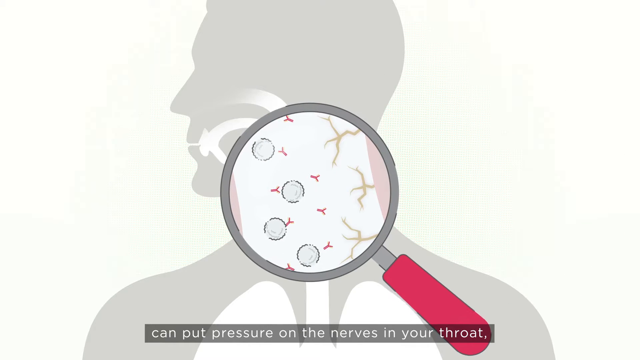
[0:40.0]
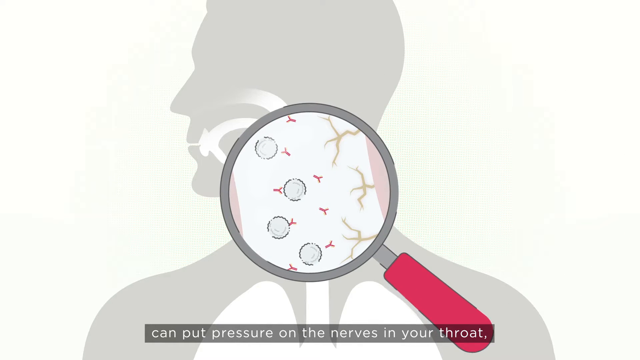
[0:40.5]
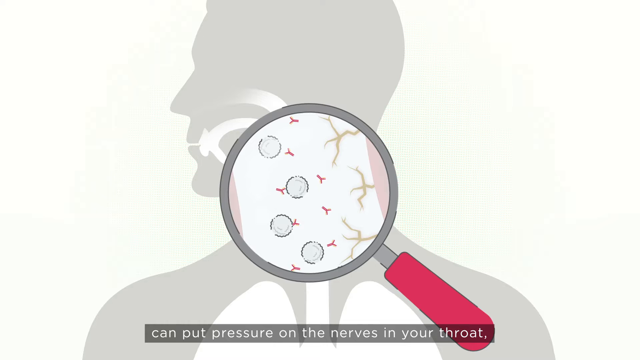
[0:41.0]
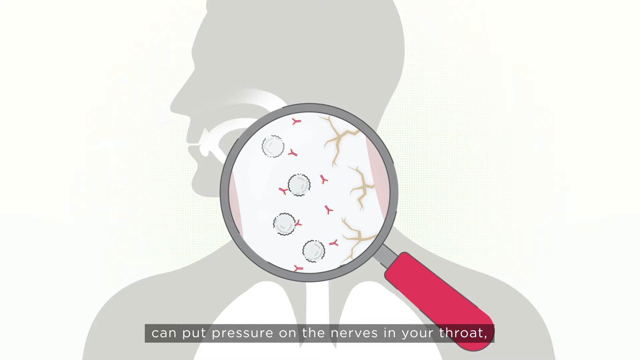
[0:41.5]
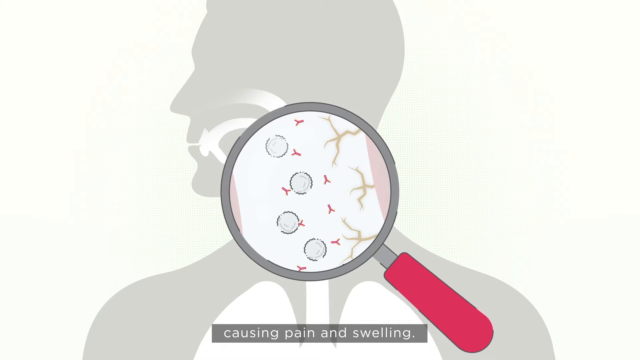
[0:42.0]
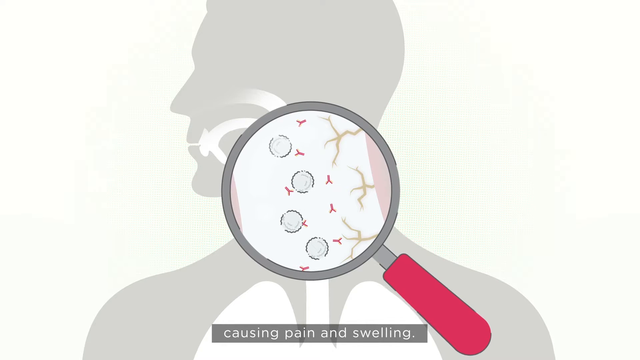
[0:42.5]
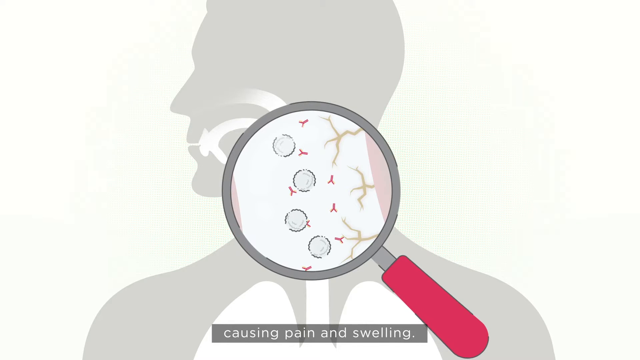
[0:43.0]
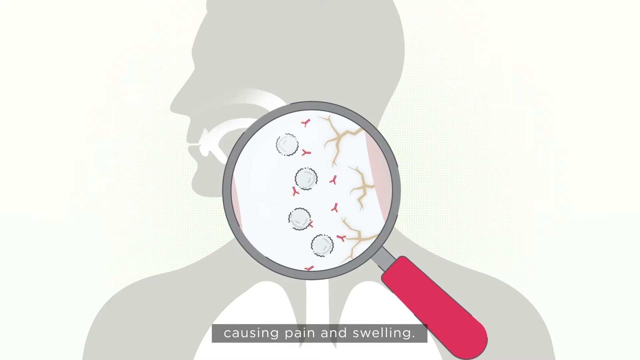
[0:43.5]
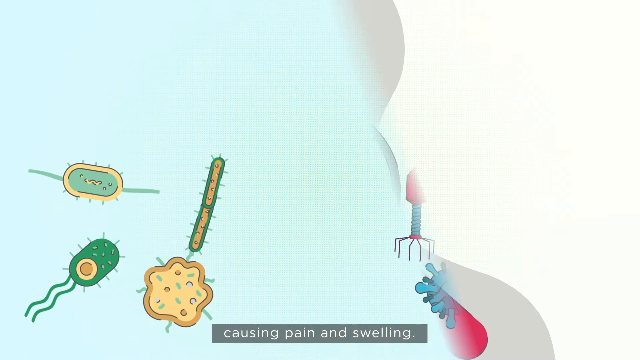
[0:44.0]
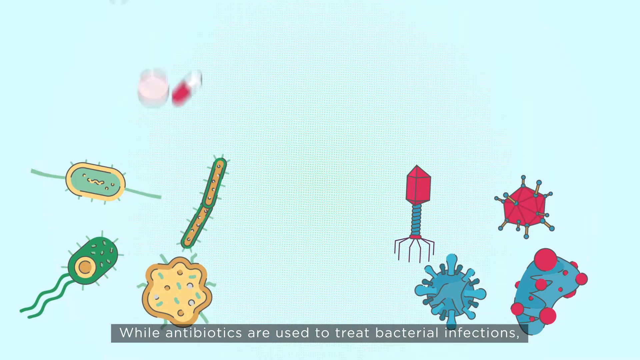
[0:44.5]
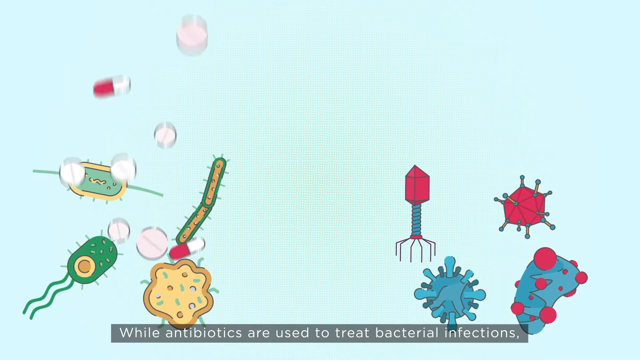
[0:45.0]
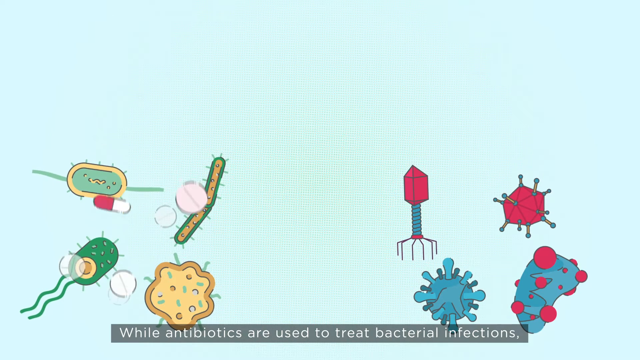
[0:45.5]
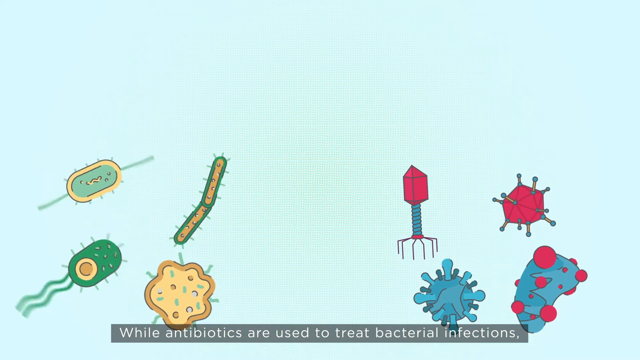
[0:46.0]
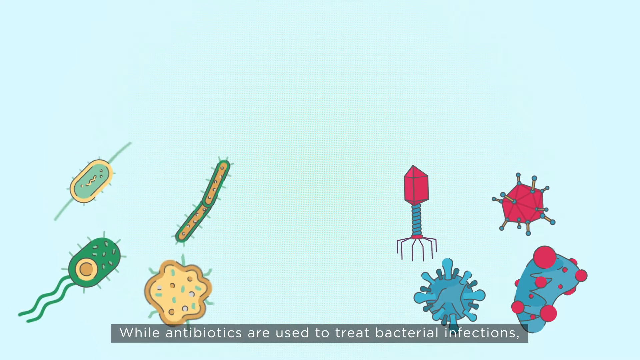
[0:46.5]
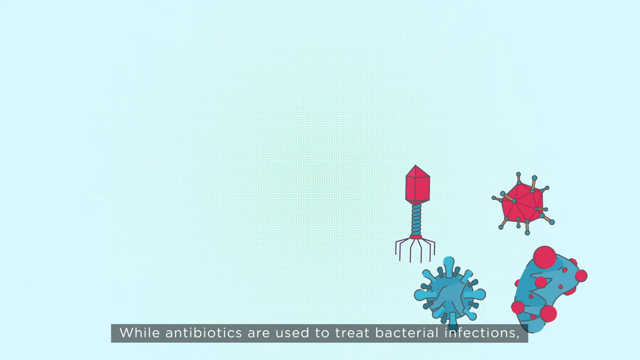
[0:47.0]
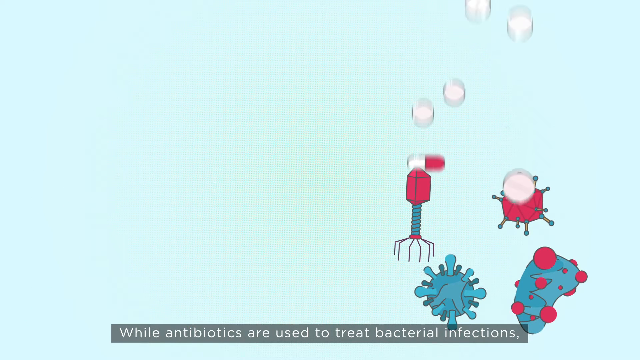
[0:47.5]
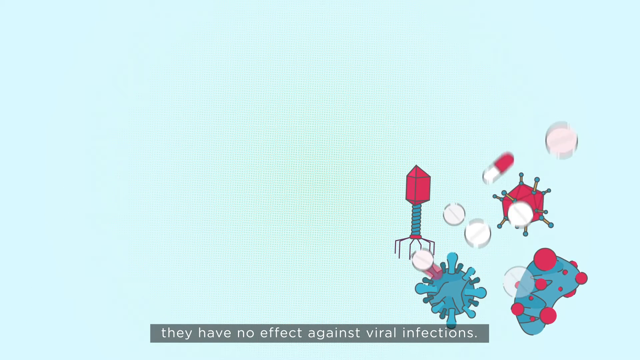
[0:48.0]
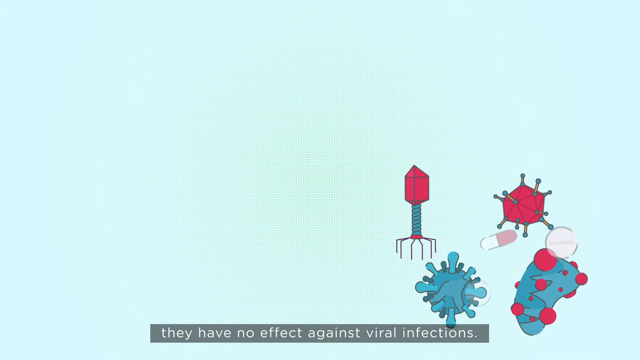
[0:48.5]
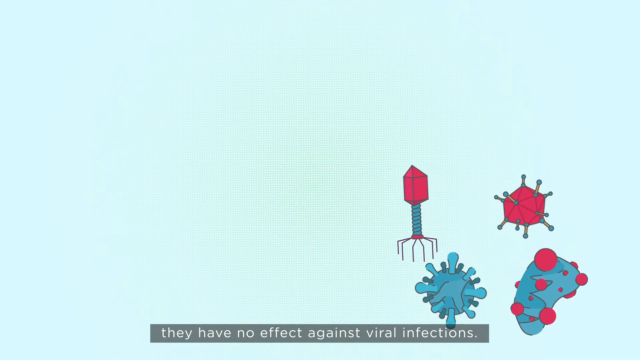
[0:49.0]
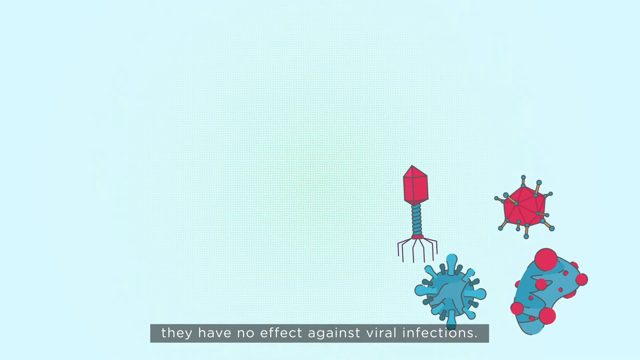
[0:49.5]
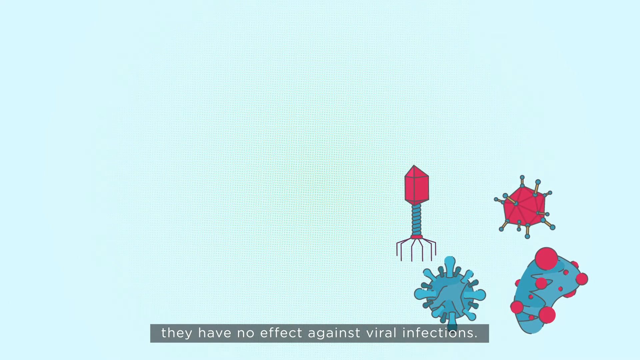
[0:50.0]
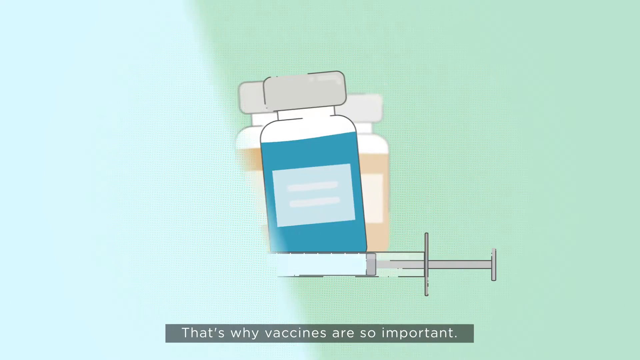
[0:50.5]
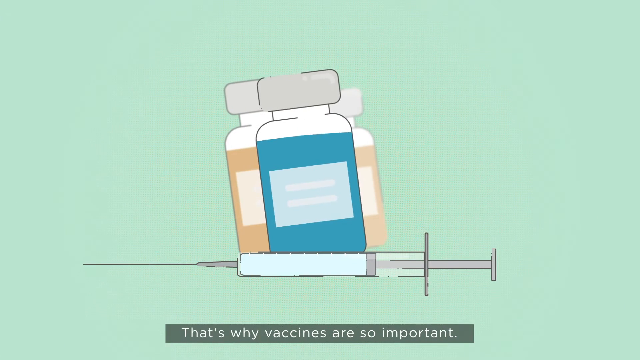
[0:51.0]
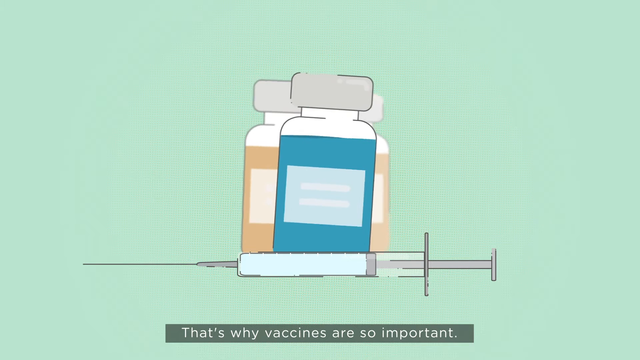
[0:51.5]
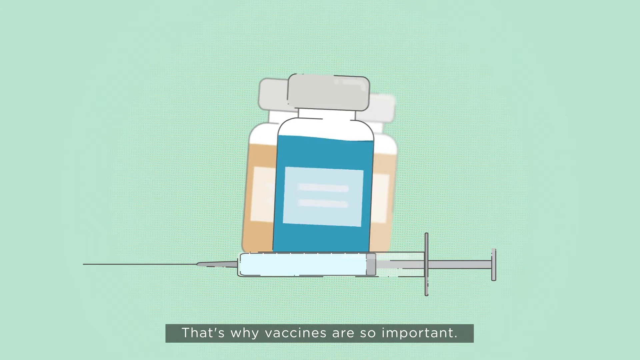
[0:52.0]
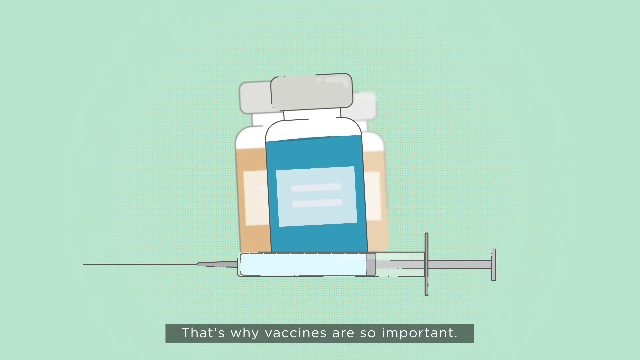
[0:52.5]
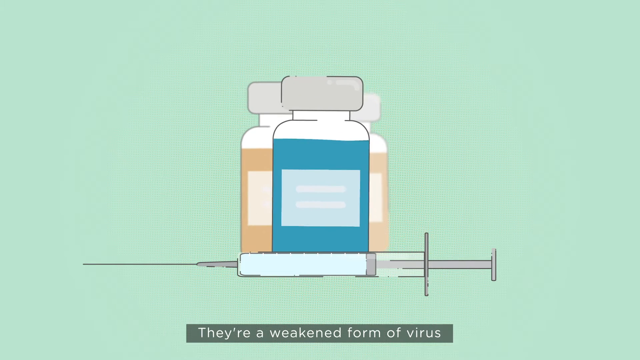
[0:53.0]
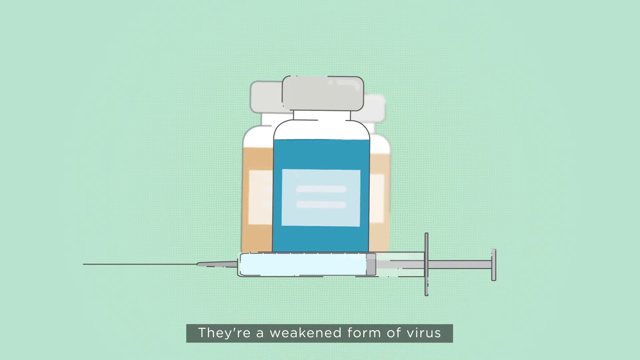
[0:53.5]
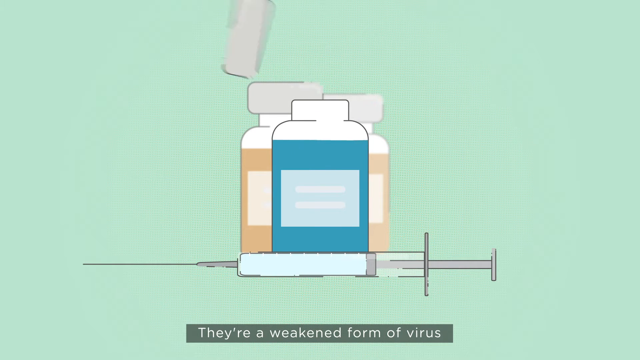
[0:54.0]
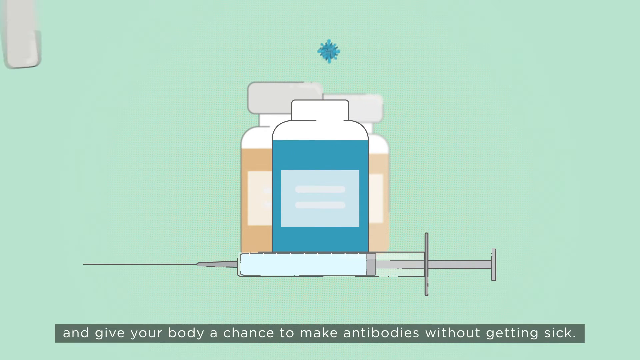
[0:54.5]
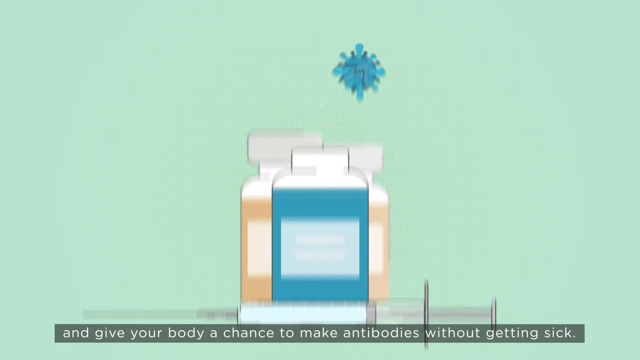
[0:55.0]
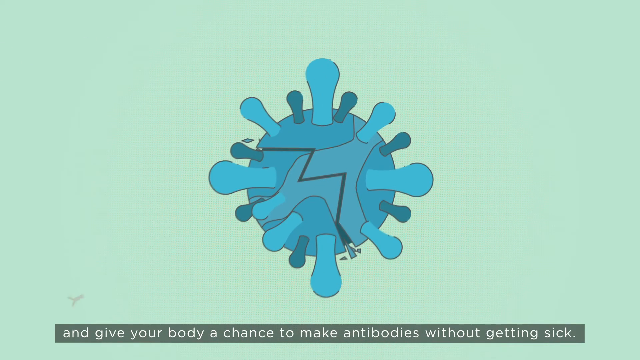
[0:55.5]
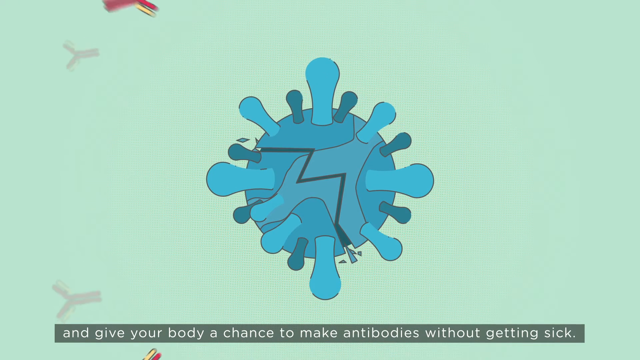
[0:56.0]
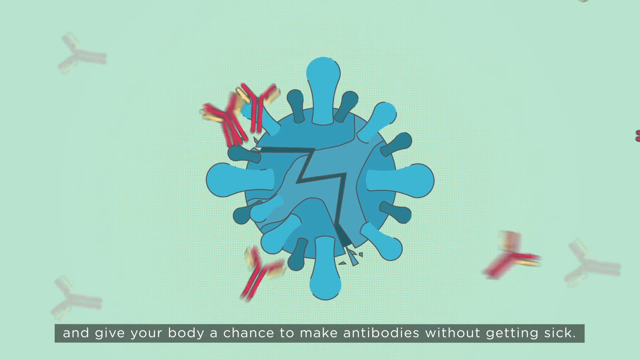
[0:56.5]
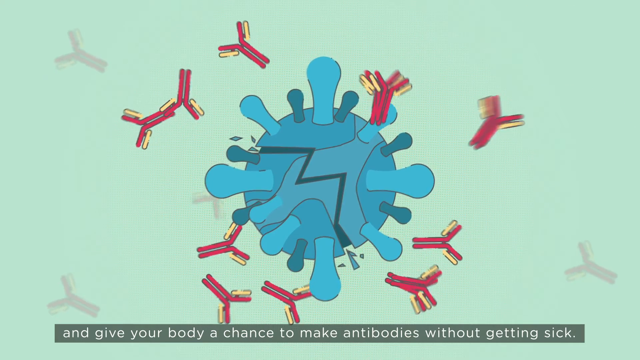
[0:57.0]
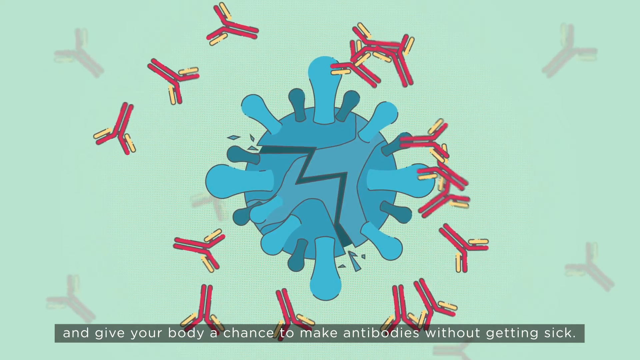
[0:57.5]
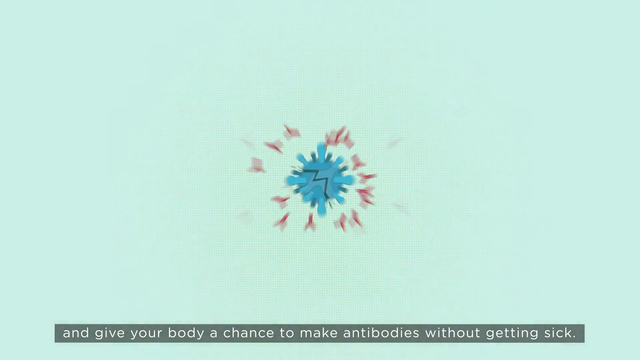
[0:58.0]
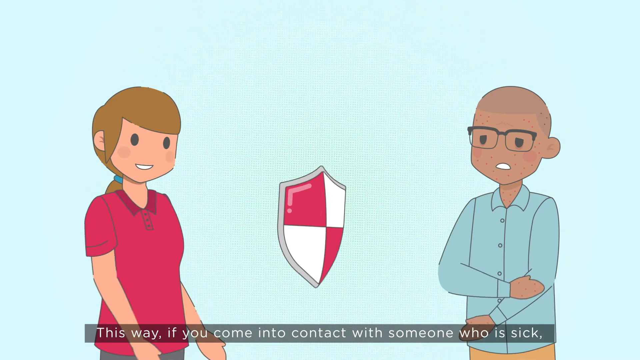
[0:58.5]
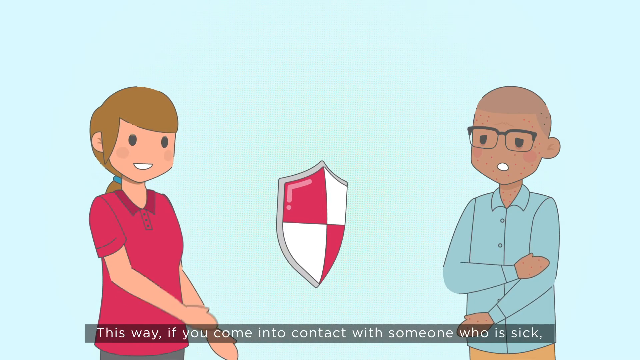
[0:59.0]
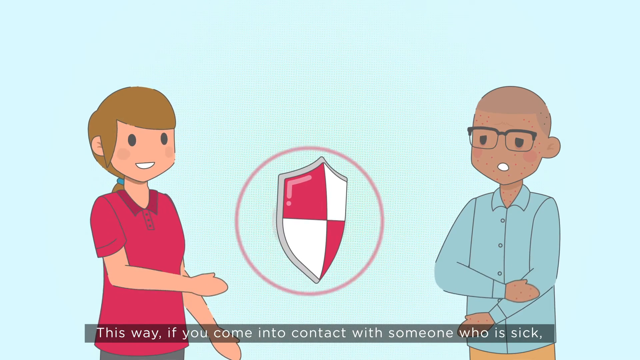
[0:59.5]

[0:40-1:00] A little magnifying glass is over a grey silhouette of a person's throat. Inside it are what appear to be small animated white blood cells, along with yellow branch-like shapes inside the throat and little red specks floating around the white blobs. The scene cuts to a blue background with many different animated bacteria floating around the screen. Pills drop down from the top of the screen toward the bacteria, and the bacteria disappear in response. The pills are small white circles and cylinders that are half white and half red. There are eight bacteria in total: four yellow and green, and four red and blue. After they disappear, the scene cuts to a green background showing animated medicine bottles with a needle in front of them. The two bottles at the back are orange and the one at the front is blue, all with grey caps. The blue bottle opens and a little spiky ball floats out of it, and red and yellow wishbone-shaped things fly at the ball.